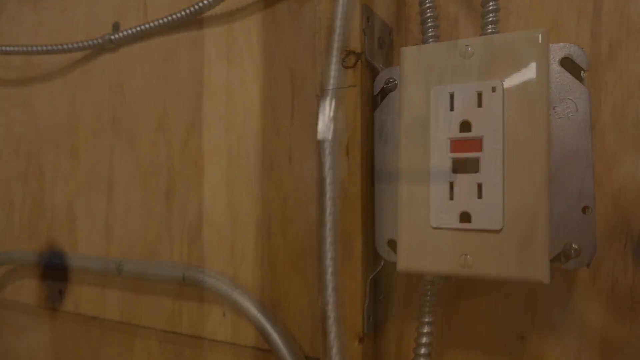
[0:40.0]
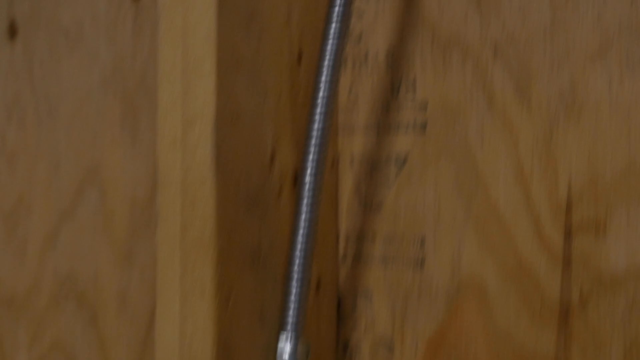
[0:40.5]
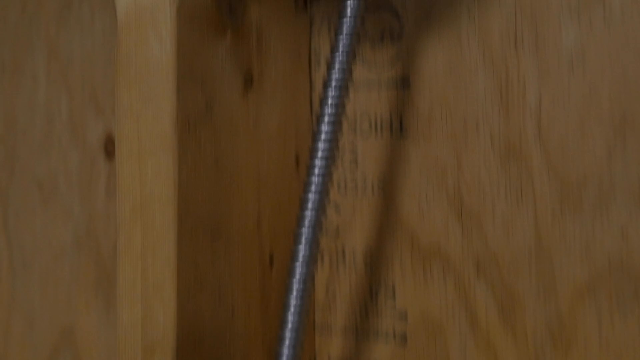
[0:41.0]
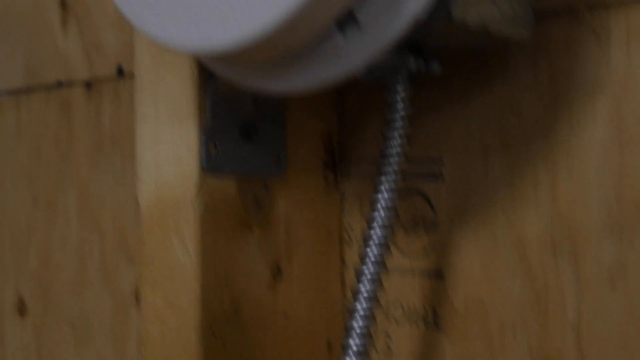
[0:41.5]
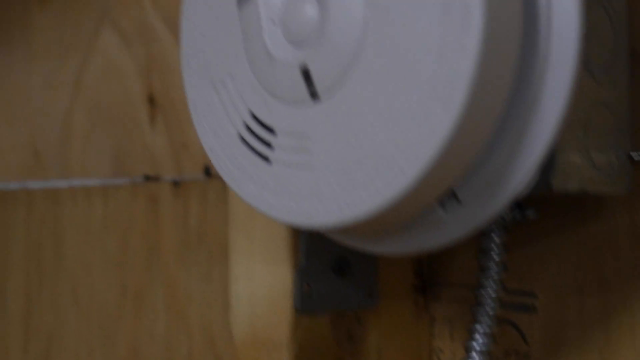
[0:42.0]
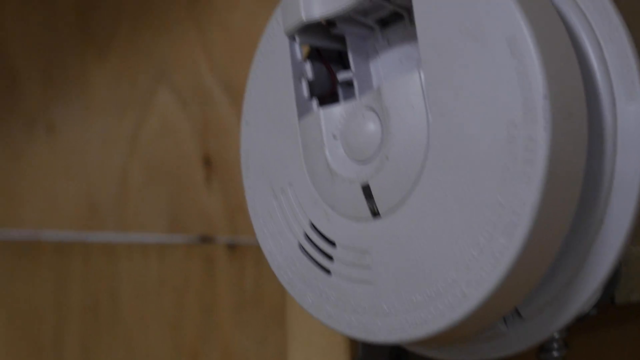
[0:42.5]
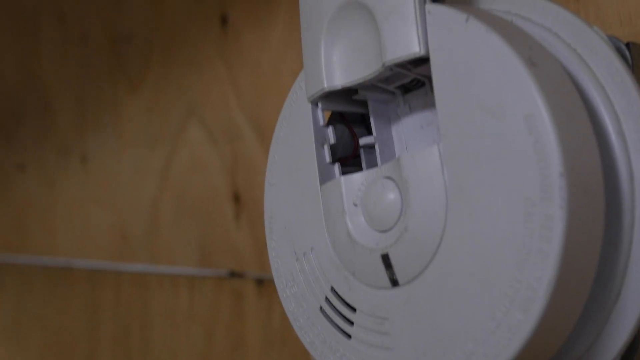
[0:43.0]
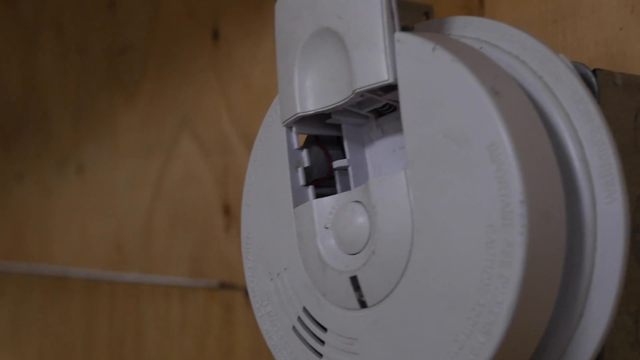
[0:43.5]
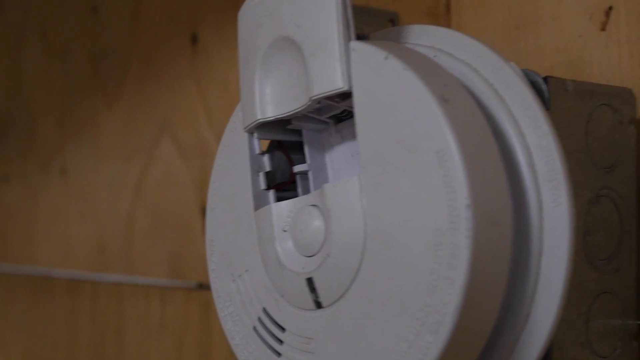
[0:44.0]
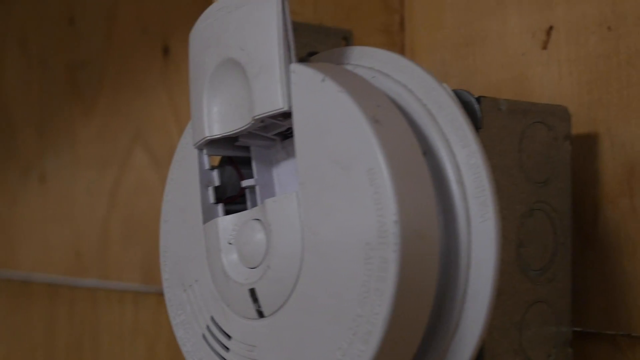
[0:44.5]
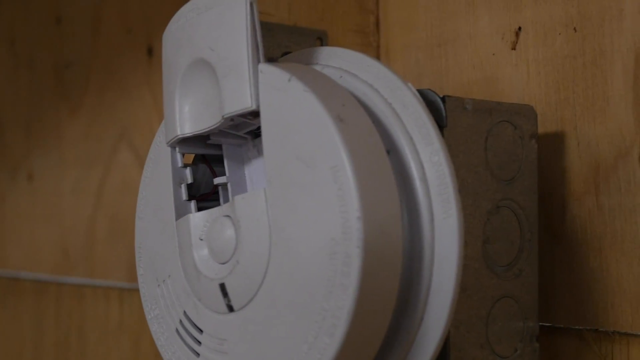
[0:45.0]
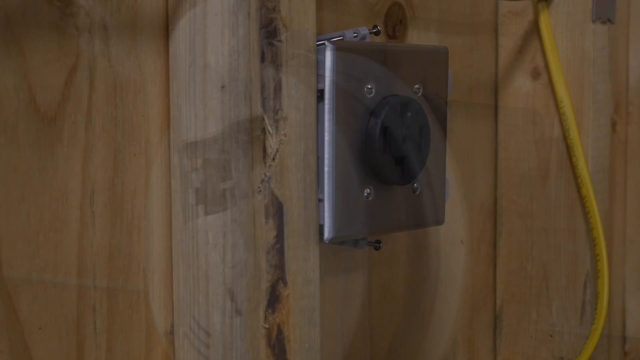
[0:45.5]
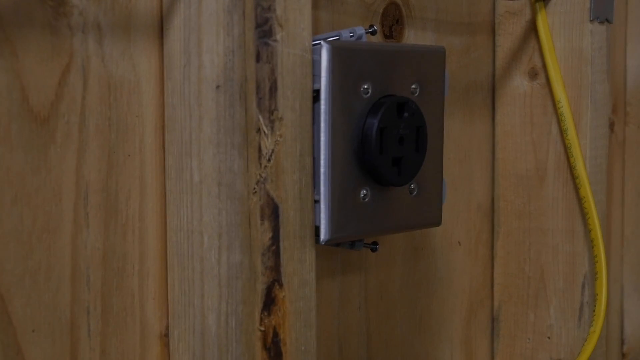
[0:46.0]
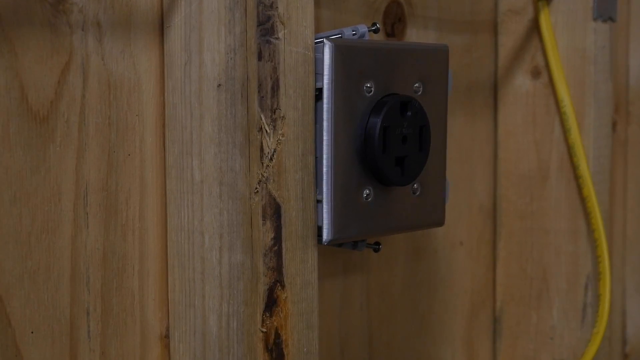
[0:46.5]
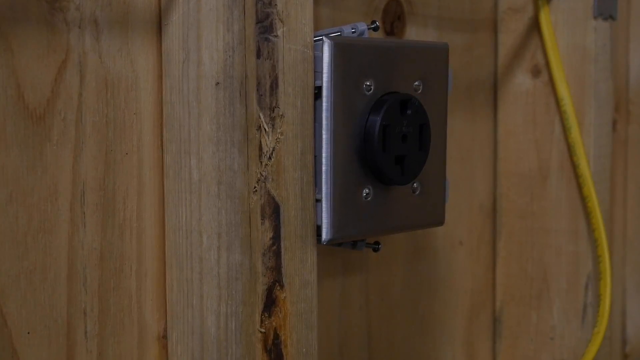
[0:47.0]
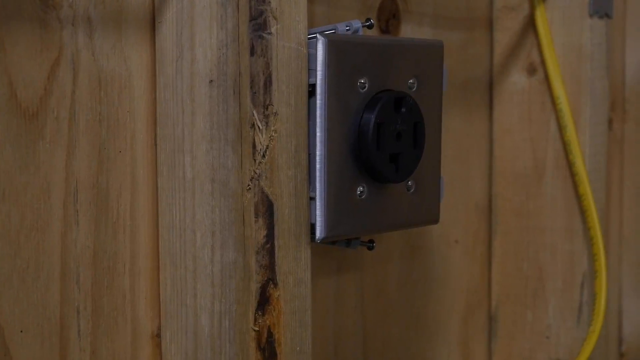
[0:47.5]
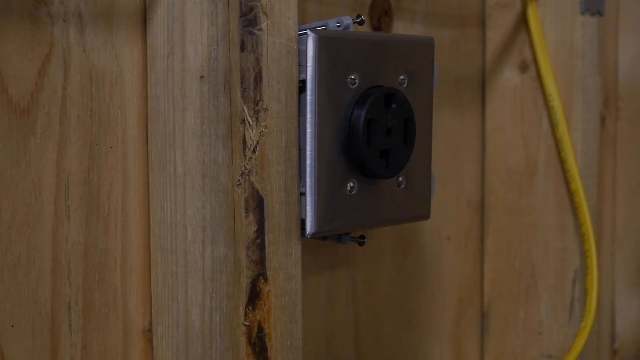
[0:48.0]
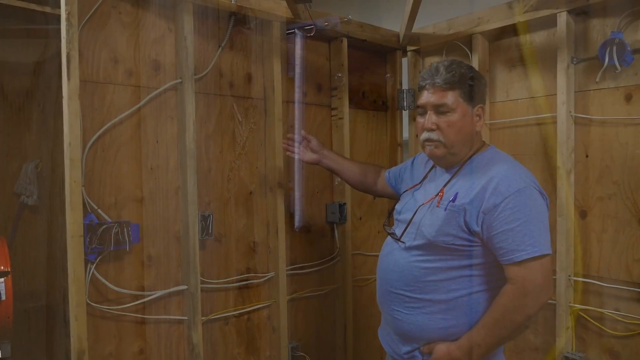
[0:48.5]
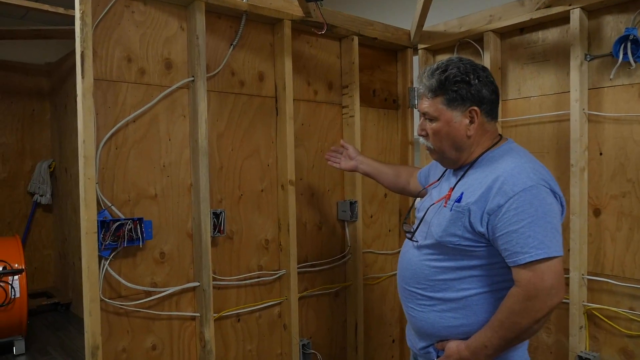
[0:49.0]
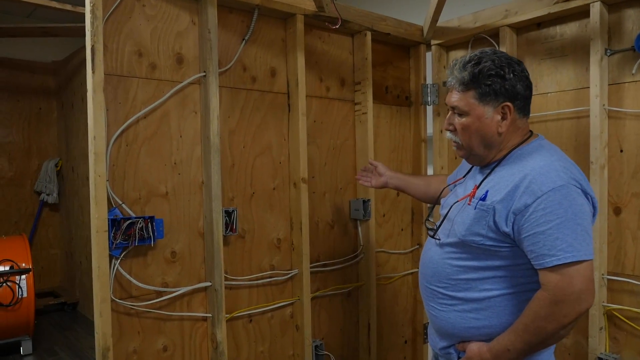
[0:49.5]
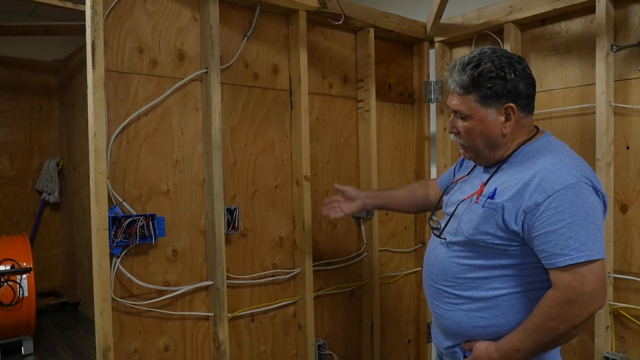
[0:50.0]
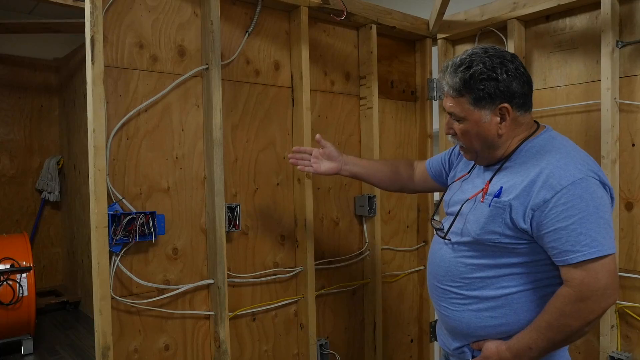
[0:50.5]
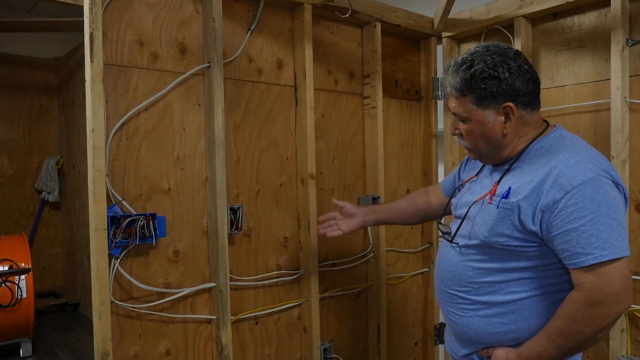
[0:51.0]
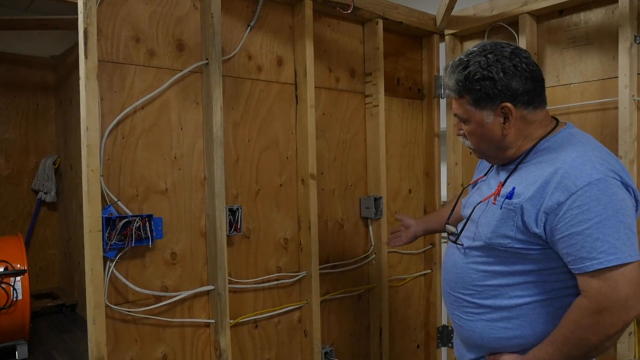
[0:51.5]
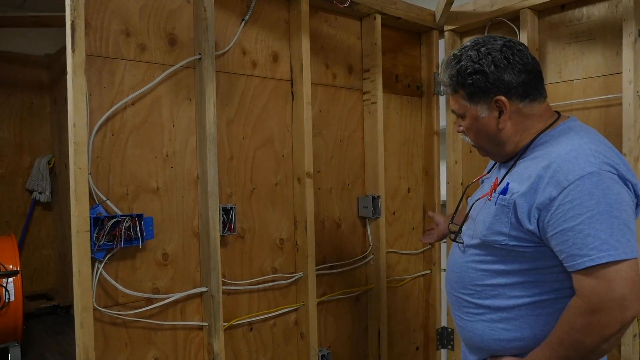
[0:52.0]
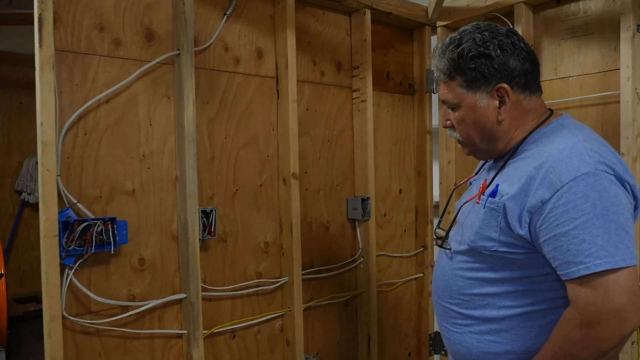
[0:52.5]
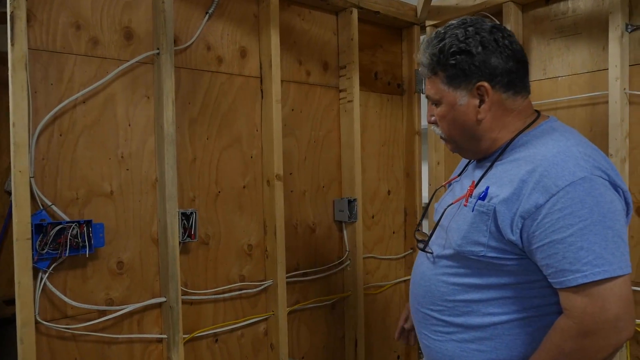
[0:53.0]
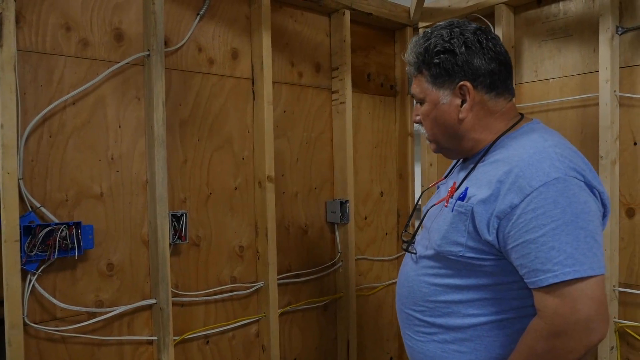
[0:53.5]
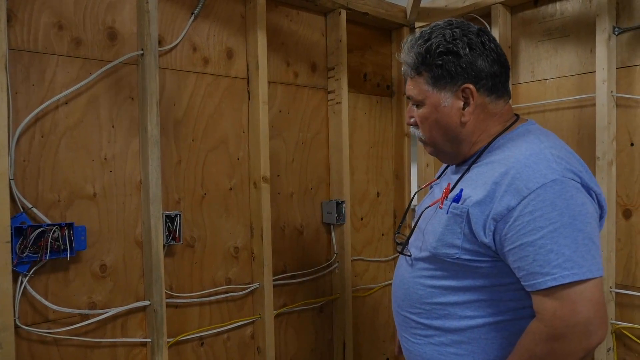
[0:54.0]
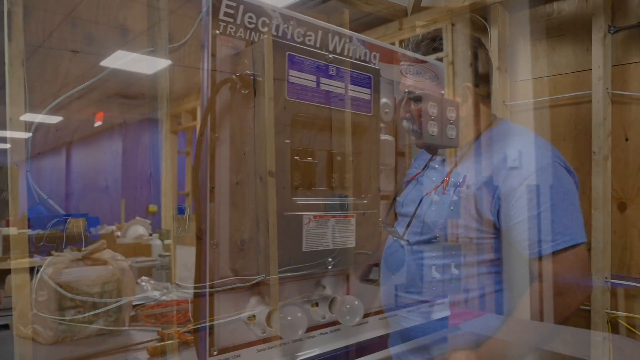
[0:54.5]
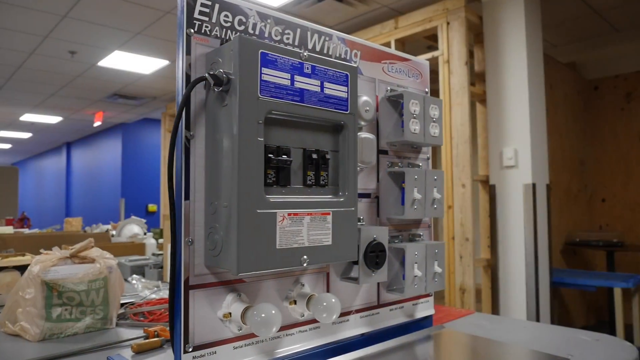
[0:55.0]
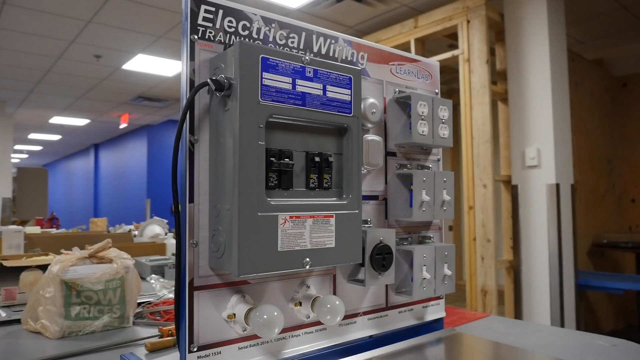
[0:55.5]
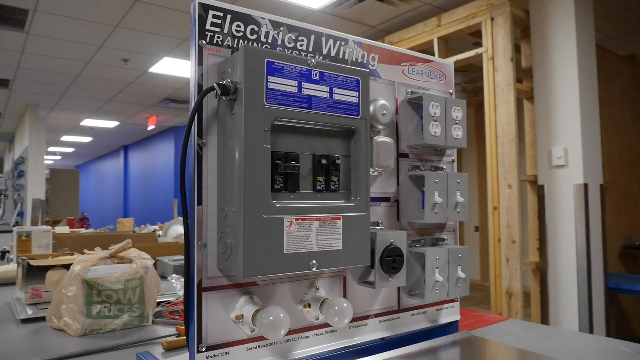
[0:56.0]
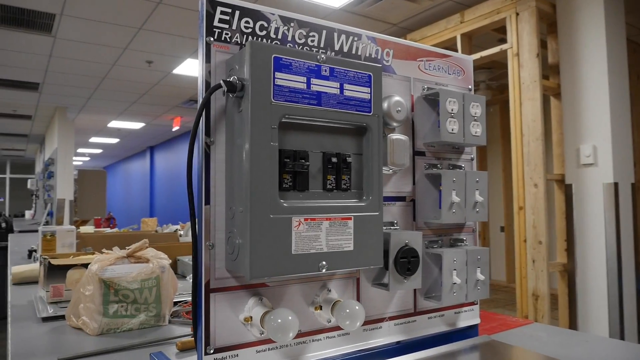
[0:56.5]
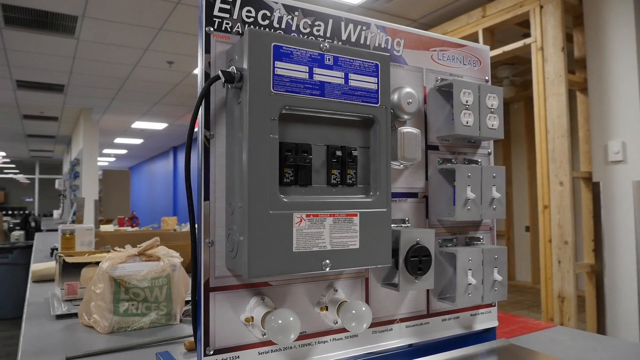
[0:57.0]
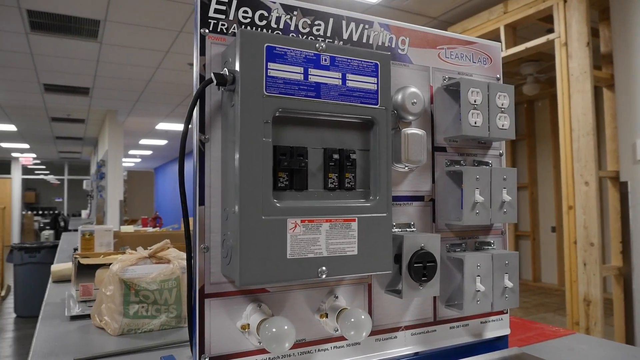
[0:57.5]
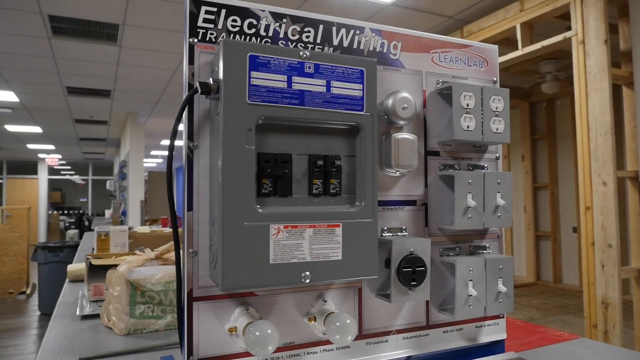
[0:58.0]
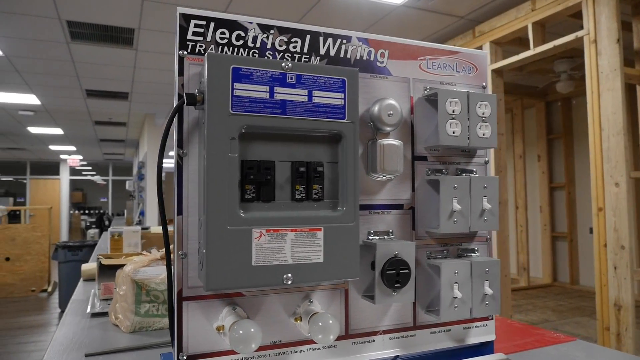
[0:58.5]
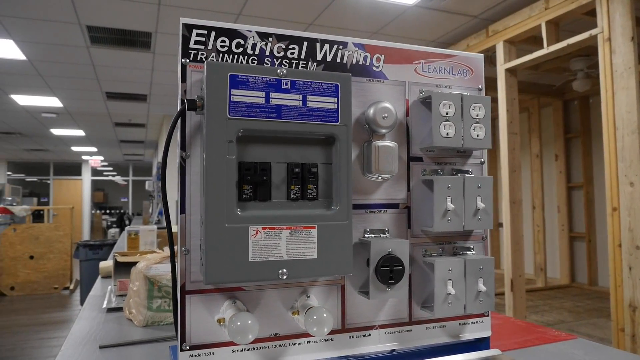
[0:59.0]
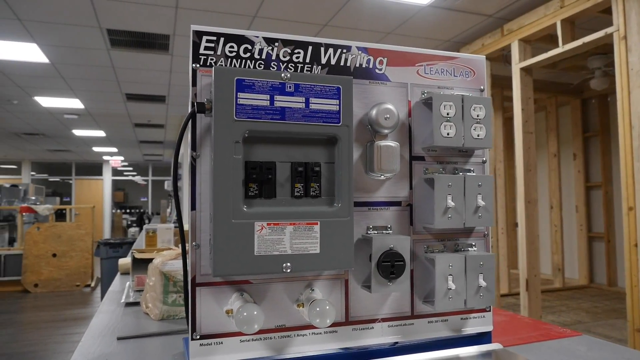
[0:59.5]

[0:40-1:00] The video pans through the room, showing how the wires and switches have been laid, and the man appears, explaining and describing. A row of wires and an unidentified black box are visible. The man uses his hand to point at something as he explains. The video then pans to a modern board with wiring, several switches, several modern sockets, and main switches. The background is a big, disorganized room.